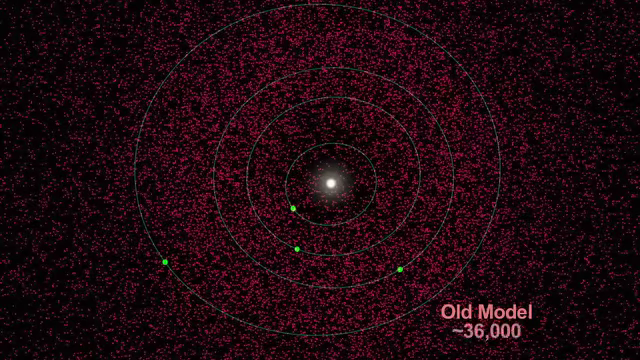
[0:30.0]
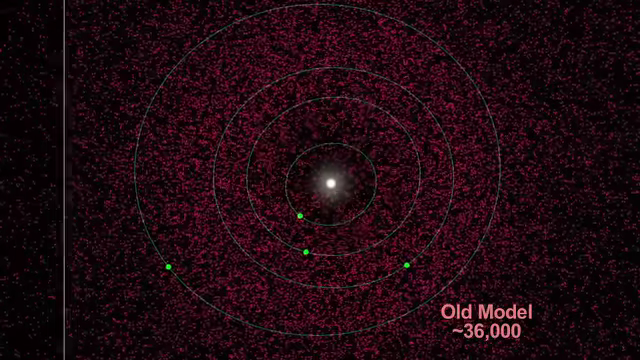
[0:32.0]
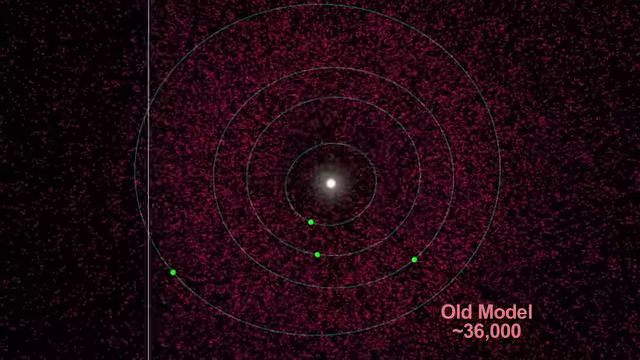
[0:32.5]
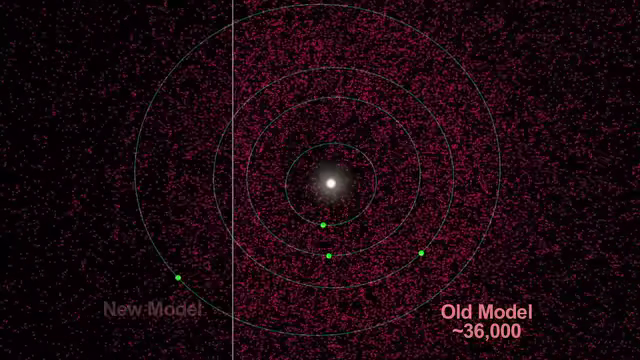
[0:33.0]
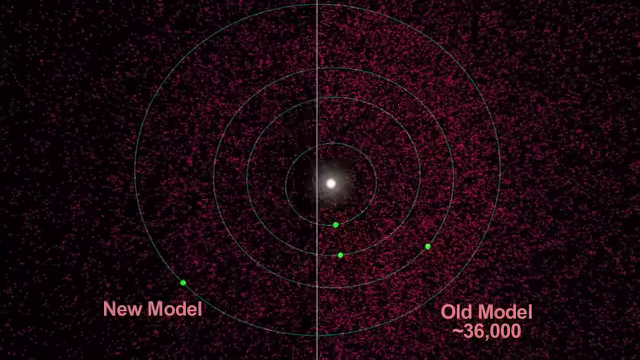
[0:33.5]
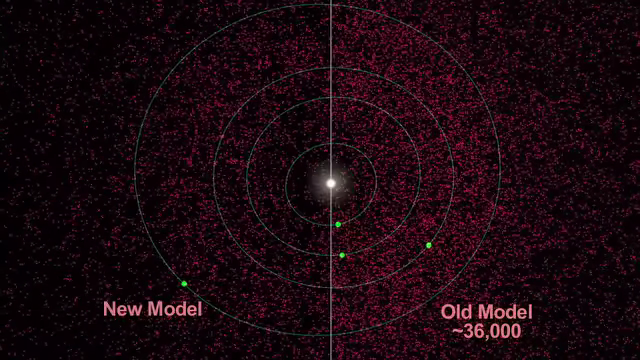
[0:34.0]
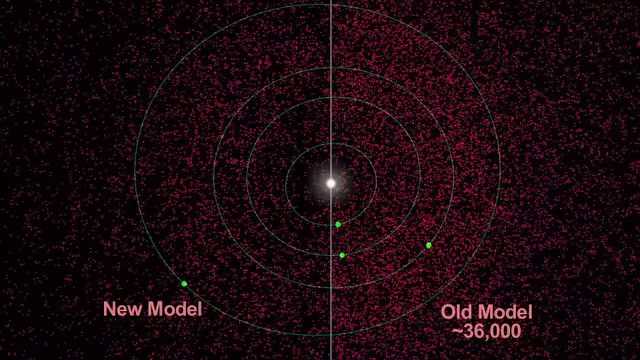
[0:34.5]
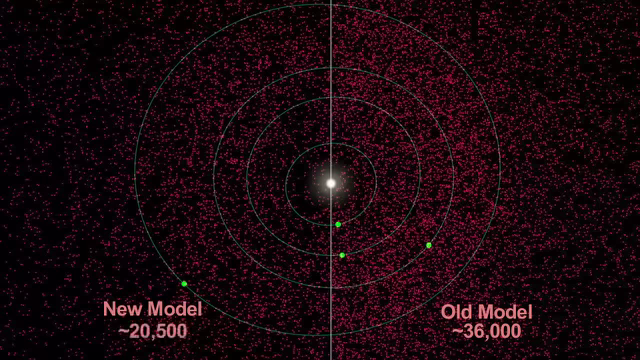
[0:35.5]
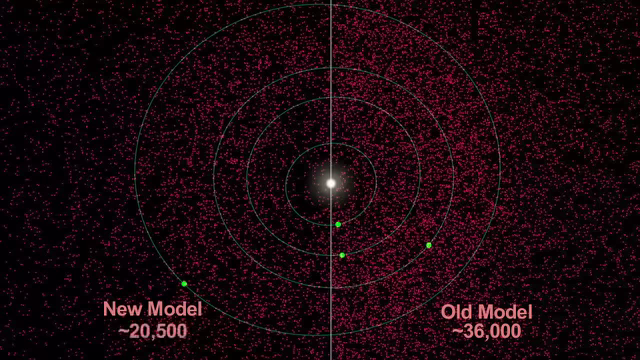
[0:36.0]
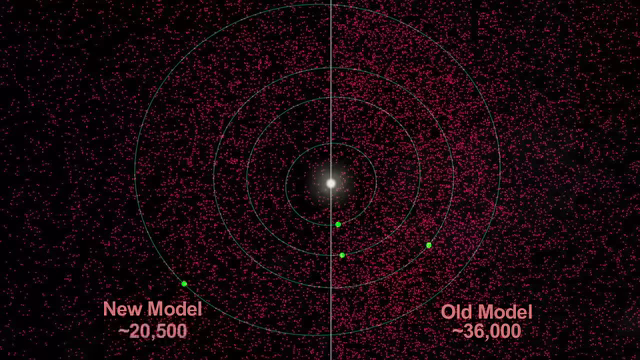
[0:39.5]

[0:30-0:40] Concentric circles appear, with a brilliant white center. In the first circle there is a green dot to the left of the white; in the next circle another green dot, not as far left; and in the third circle another green dot to the right. At the bottom is "old model" with approximately 36,000, apparently the old asteroid prediction model. Then the new model is shown, with approximately 20,500.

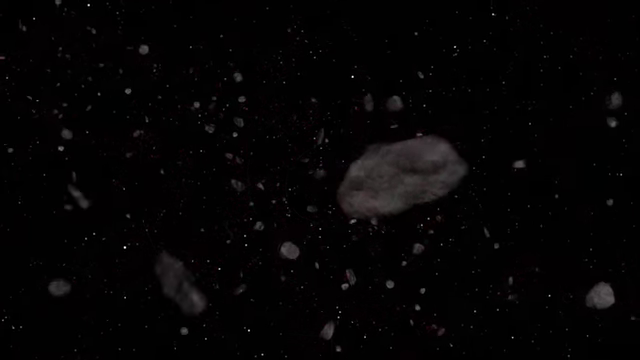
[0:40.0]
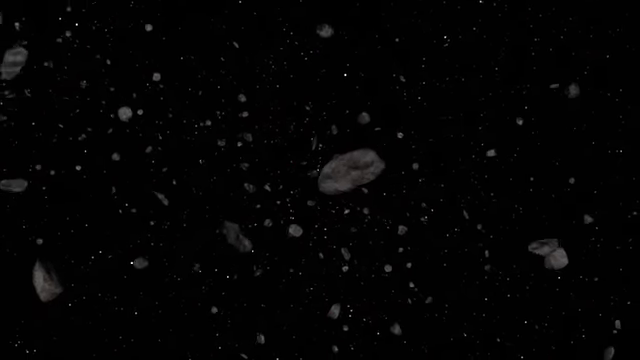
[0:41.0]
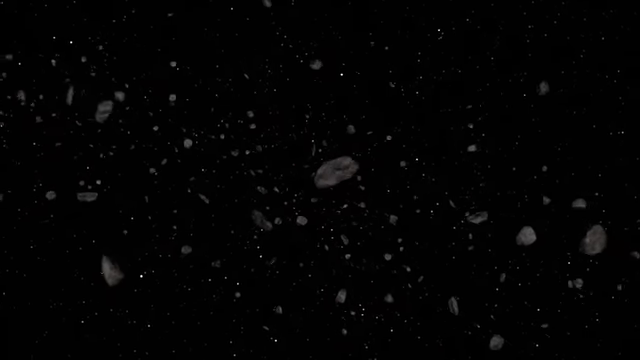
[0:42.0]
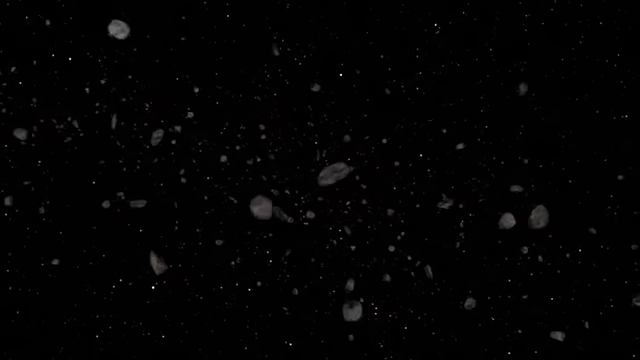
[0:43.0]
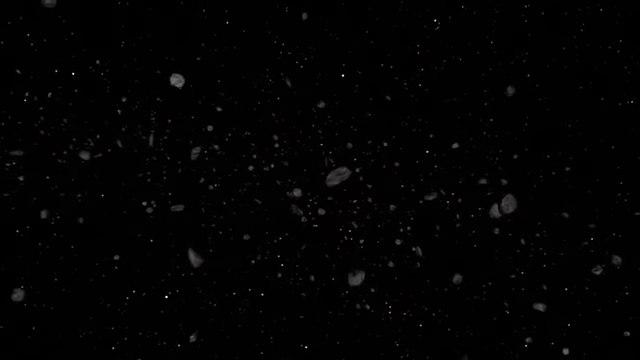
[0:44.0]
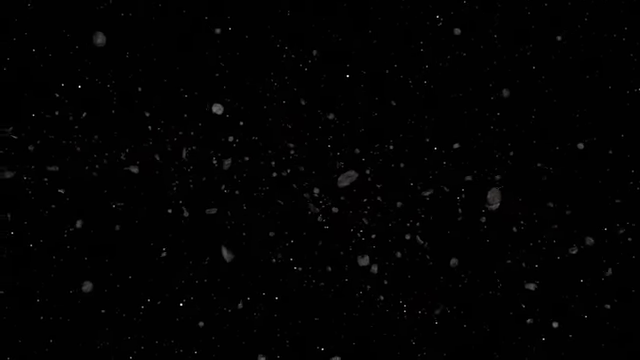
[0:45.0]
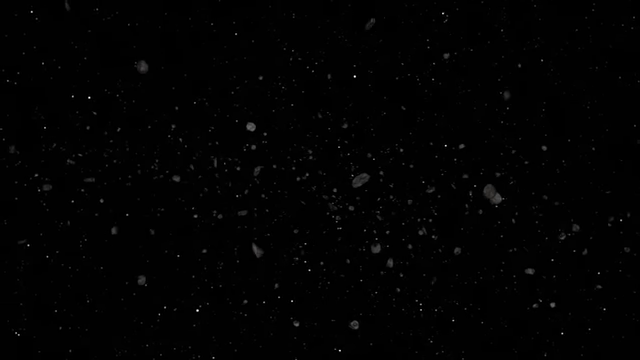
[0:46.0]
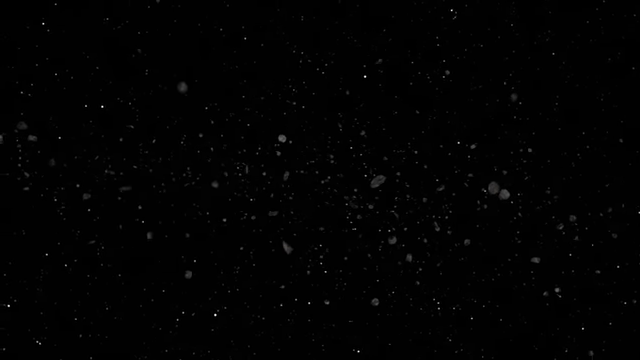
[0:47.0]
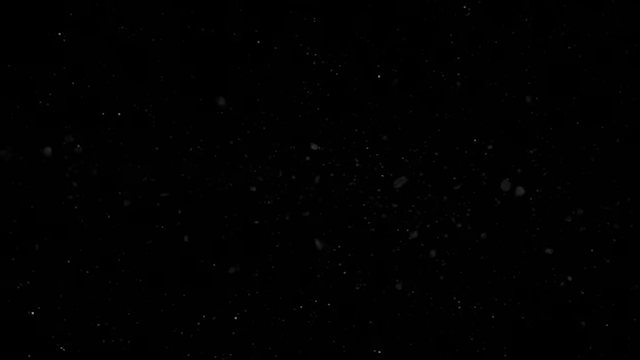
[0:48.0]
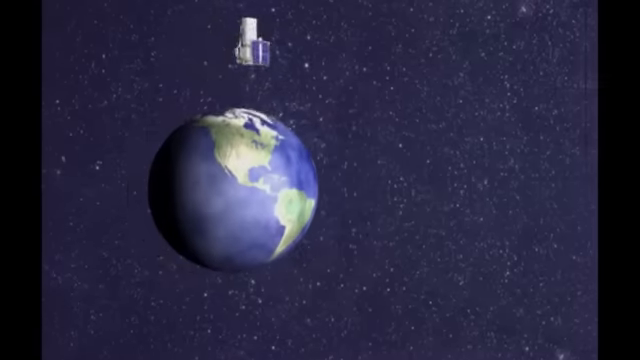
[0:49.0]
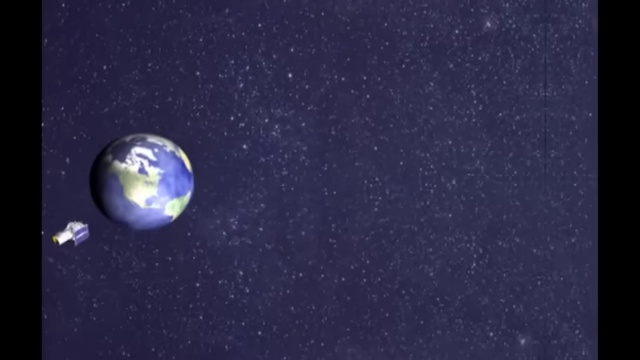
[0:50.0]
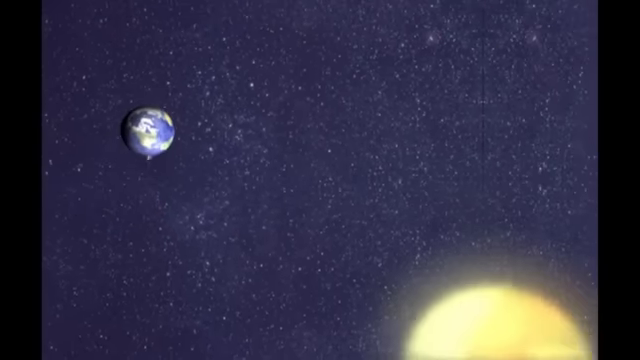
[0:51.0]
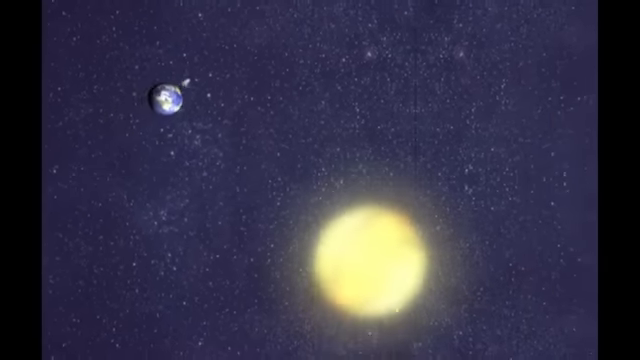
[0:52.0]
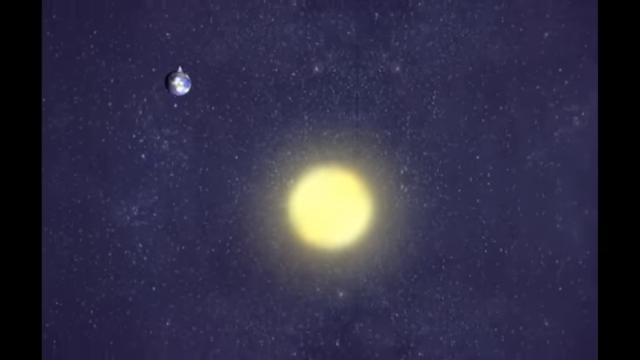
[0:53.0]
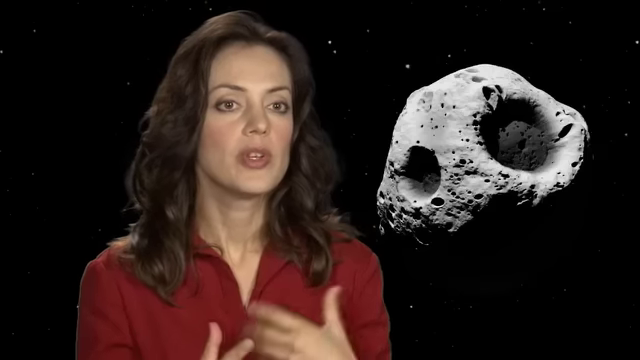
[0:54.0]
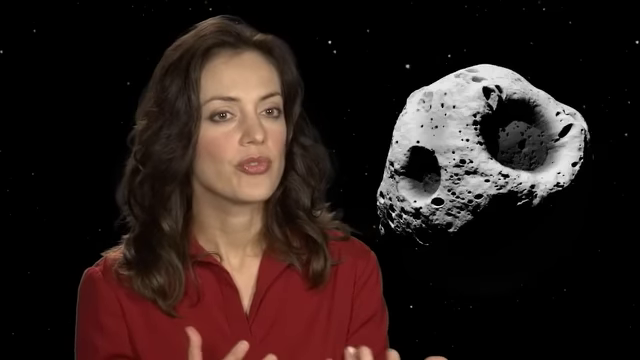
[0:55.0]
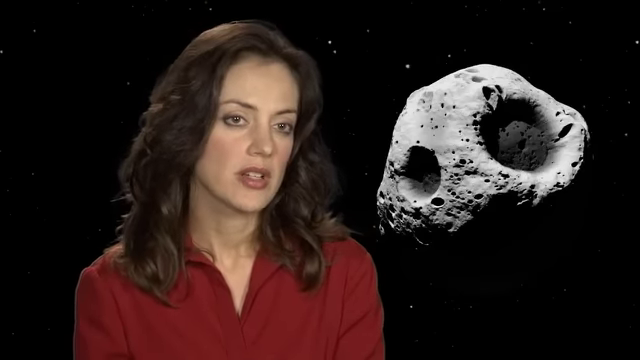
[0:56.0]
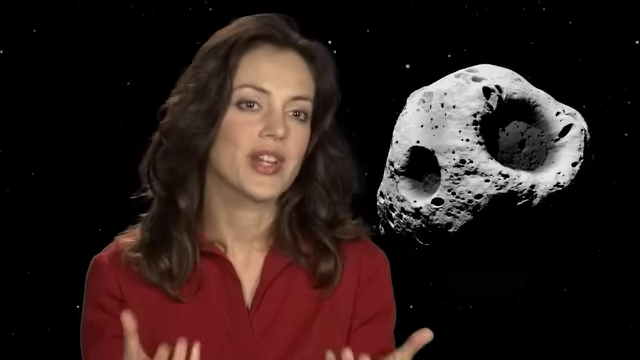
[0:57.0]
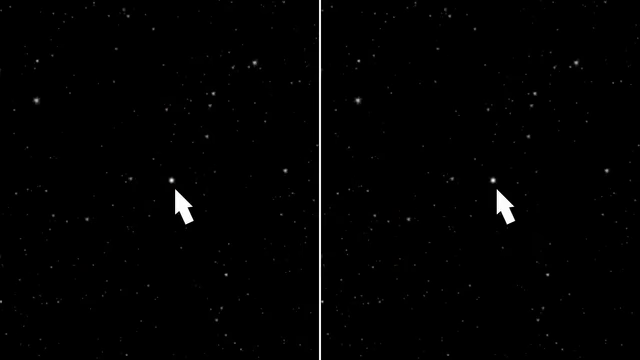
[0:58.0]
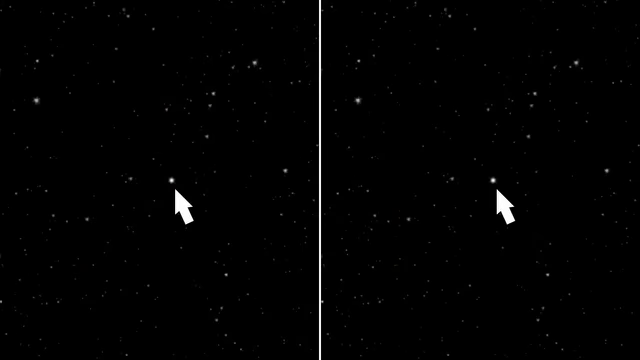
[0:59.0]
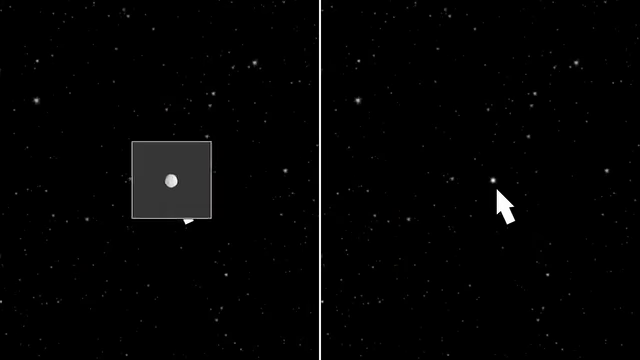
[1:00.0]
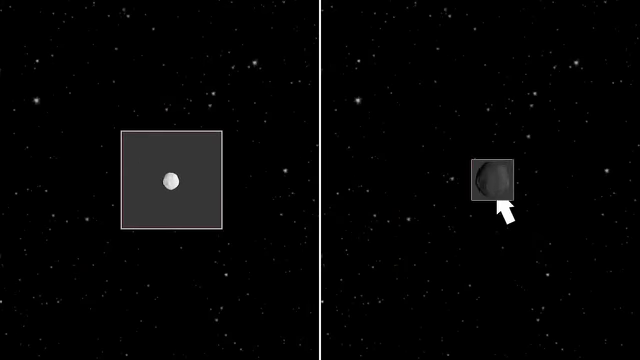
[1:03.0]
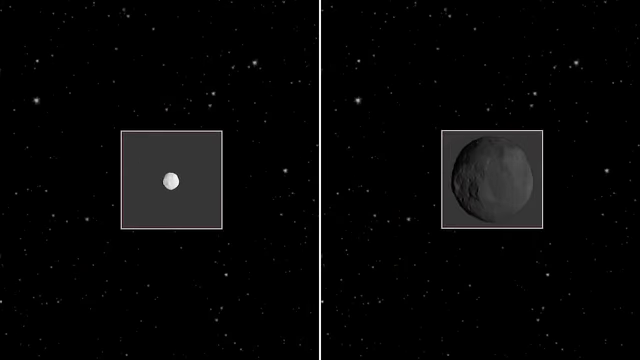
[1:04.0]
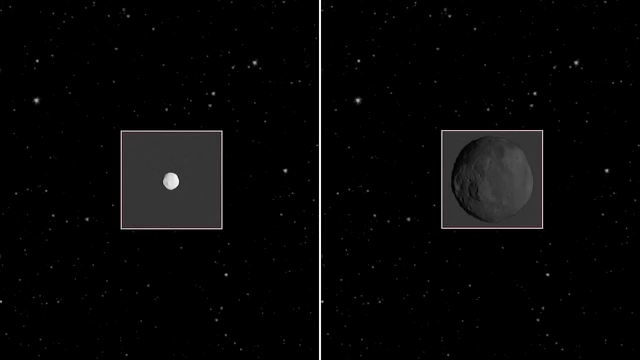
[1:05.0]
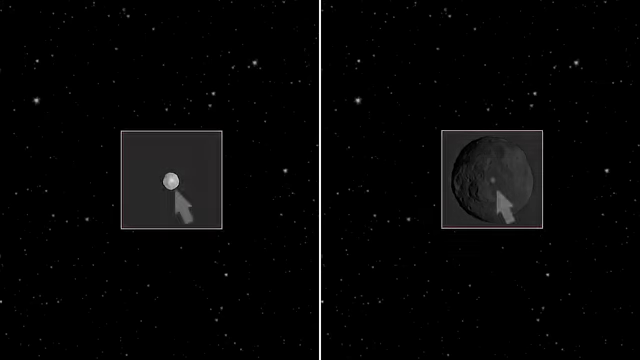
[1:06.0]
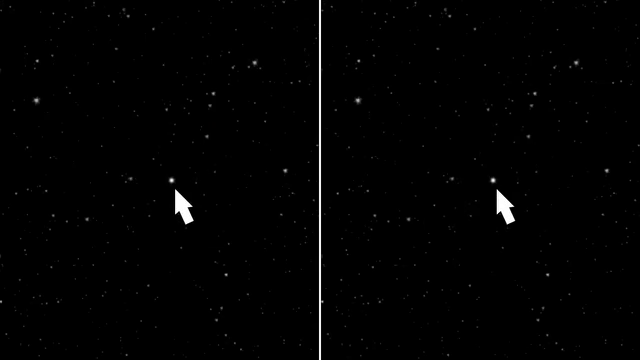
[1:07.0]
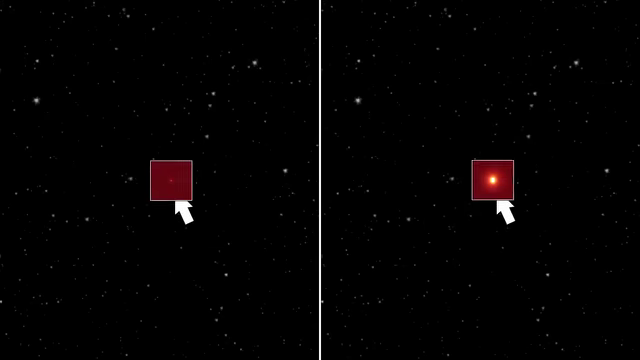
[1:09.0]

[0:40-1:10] A computer-generated outer space model shows hundreds, if not thousands, of asteroids that look like little rocks all throughout space. Next is a computer-generated model of a very large yellow sun, with a much smaller Earth to its upper left. Another woman appears, mid-40s, with dark hair and a red dress, and a picture of an asteroid, a big rock, over her left shoulder. Then the screen is divided, with two arrows pointing at a dot; the dot is made larger and is probably an asteroid. One of them is white and one is dark.